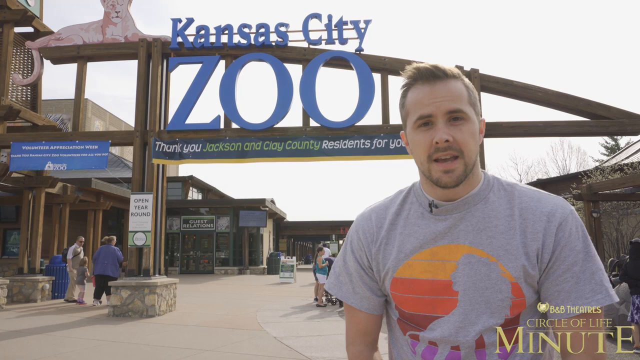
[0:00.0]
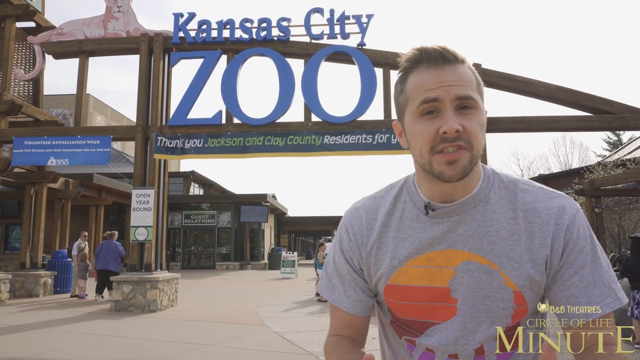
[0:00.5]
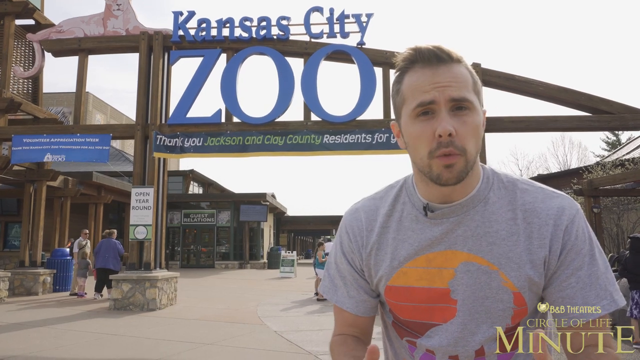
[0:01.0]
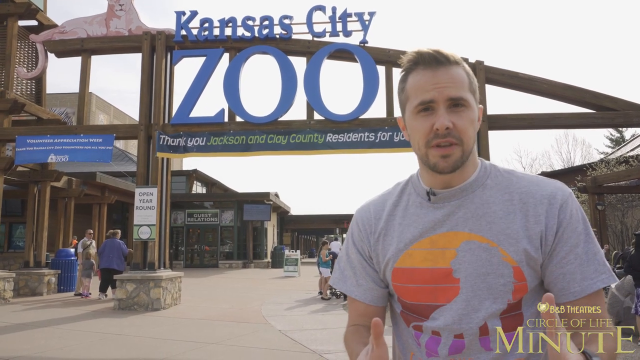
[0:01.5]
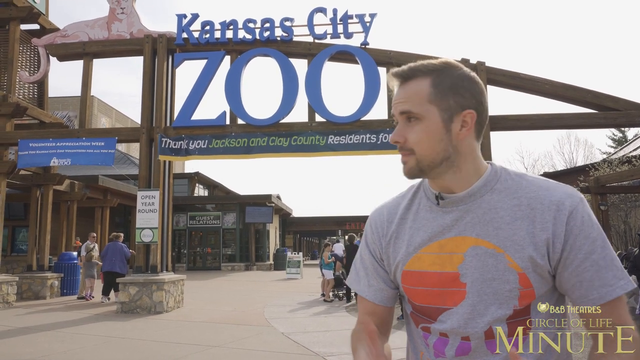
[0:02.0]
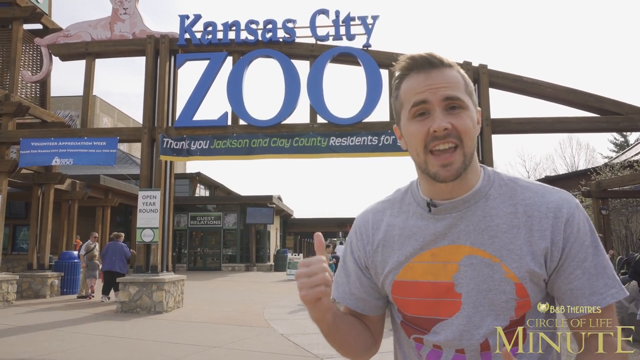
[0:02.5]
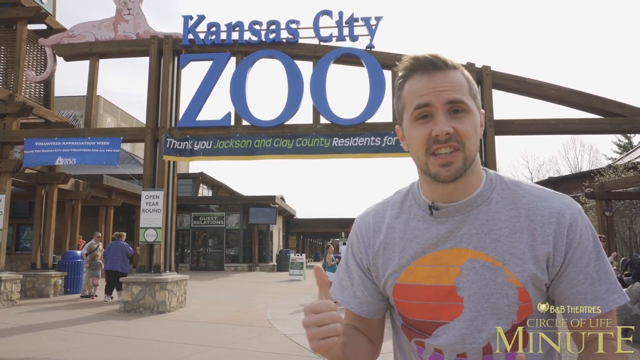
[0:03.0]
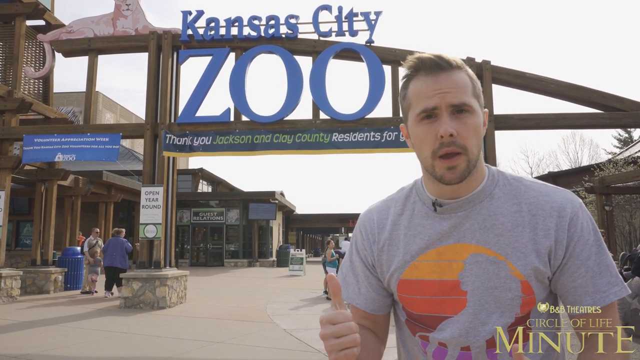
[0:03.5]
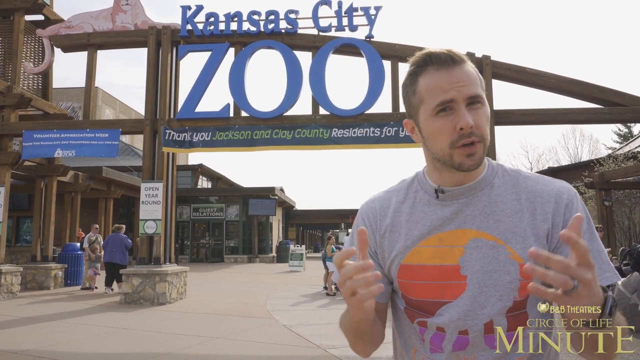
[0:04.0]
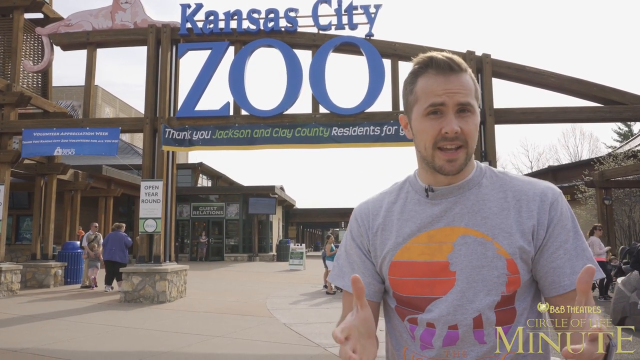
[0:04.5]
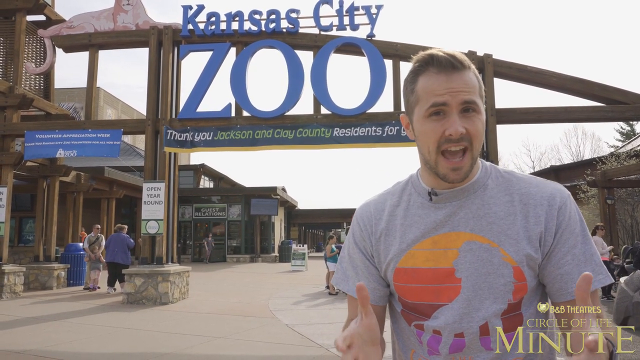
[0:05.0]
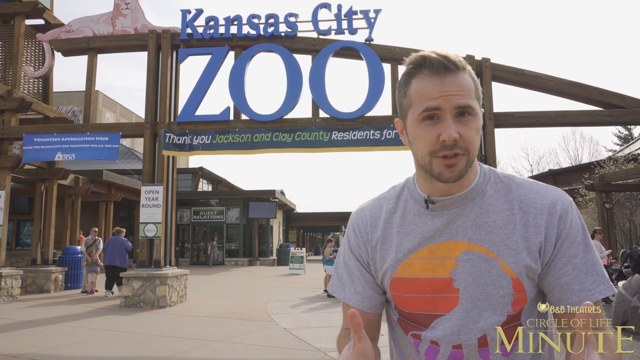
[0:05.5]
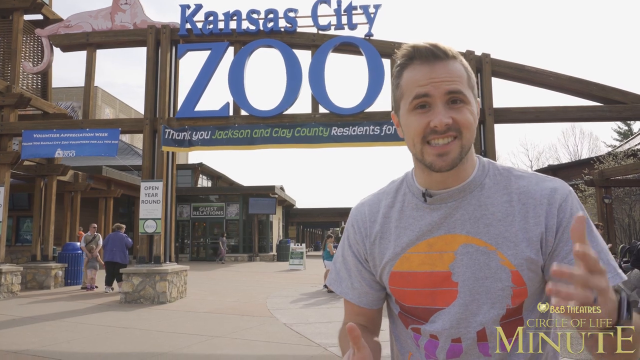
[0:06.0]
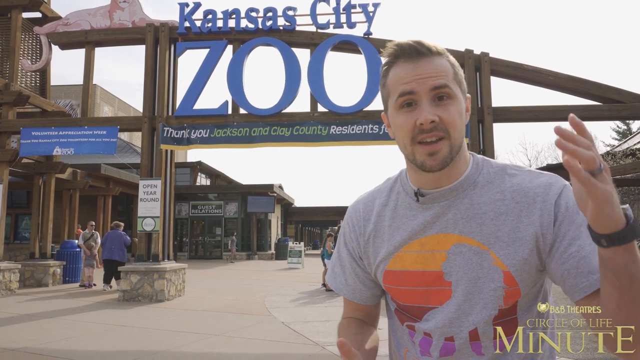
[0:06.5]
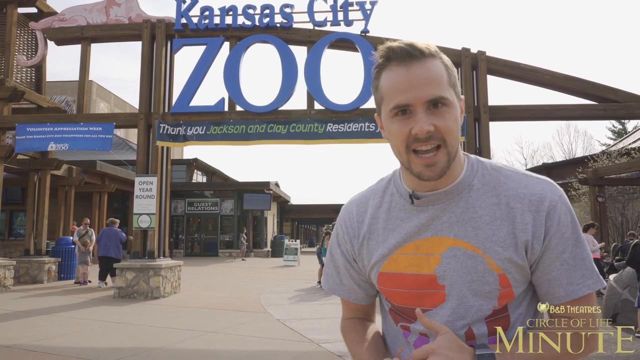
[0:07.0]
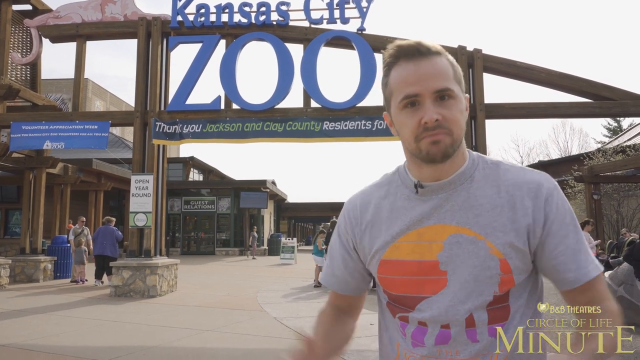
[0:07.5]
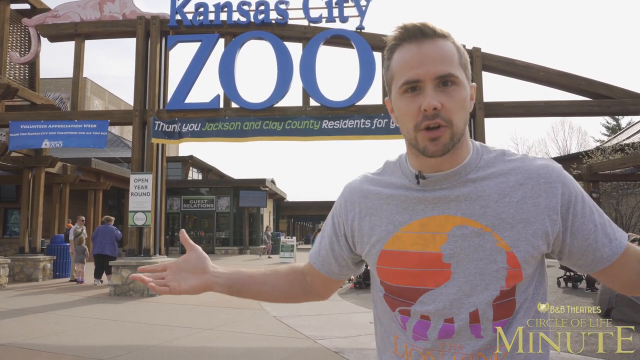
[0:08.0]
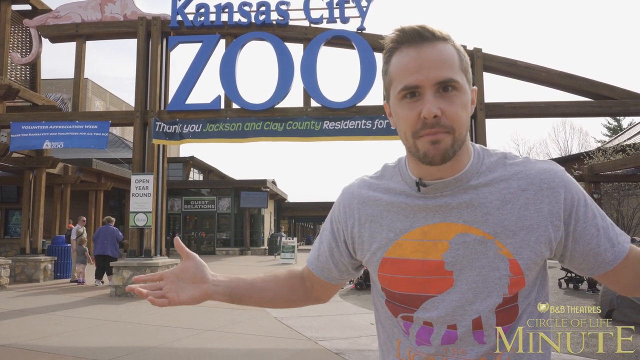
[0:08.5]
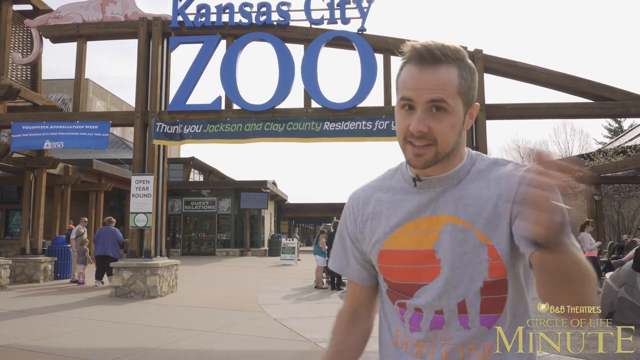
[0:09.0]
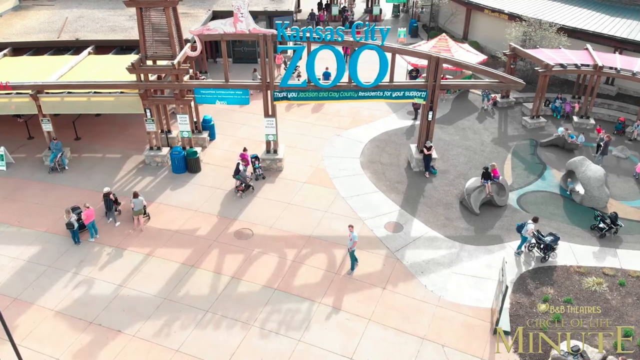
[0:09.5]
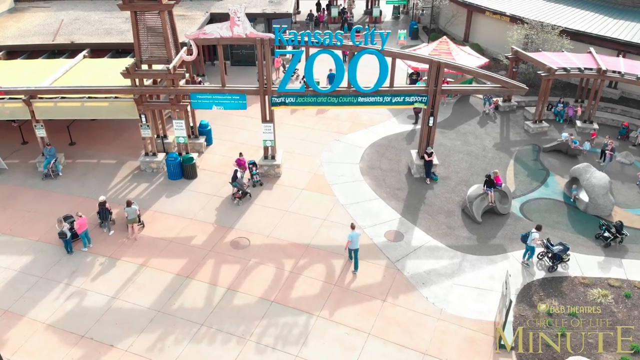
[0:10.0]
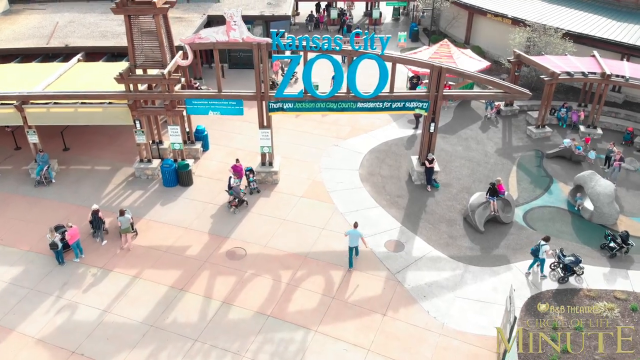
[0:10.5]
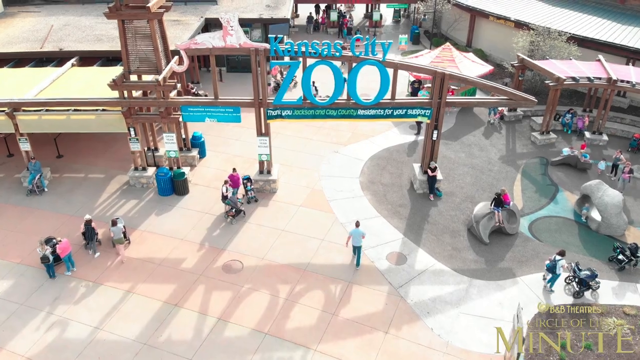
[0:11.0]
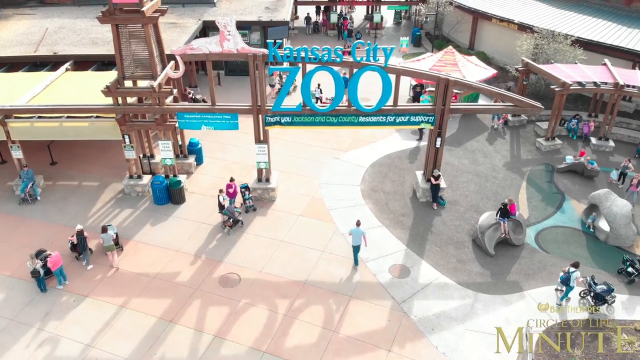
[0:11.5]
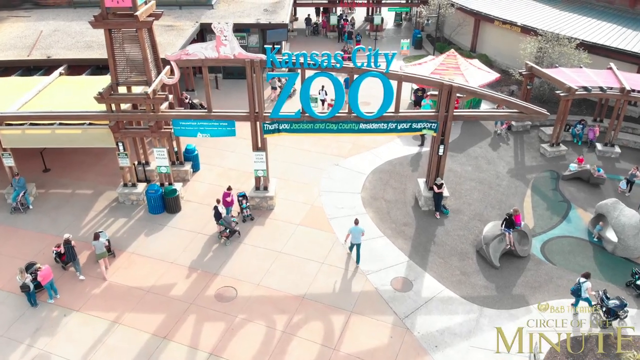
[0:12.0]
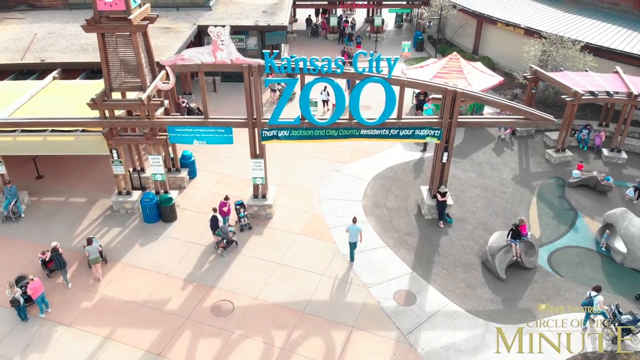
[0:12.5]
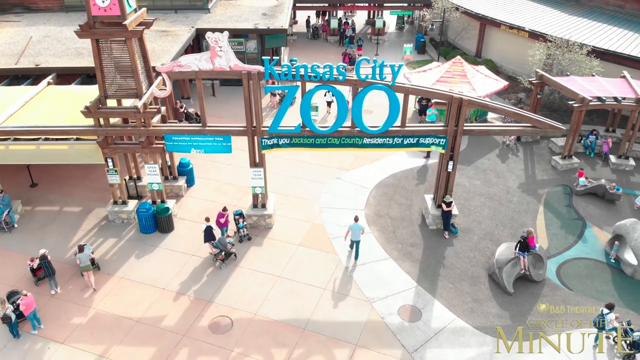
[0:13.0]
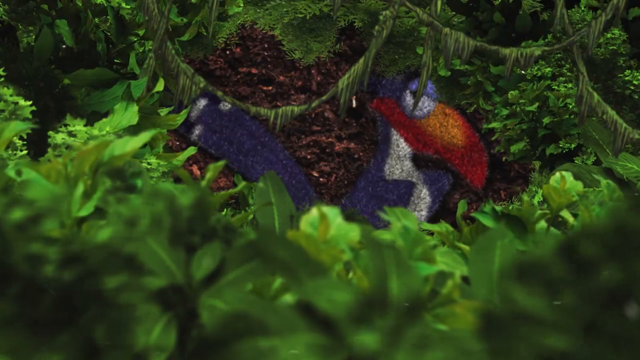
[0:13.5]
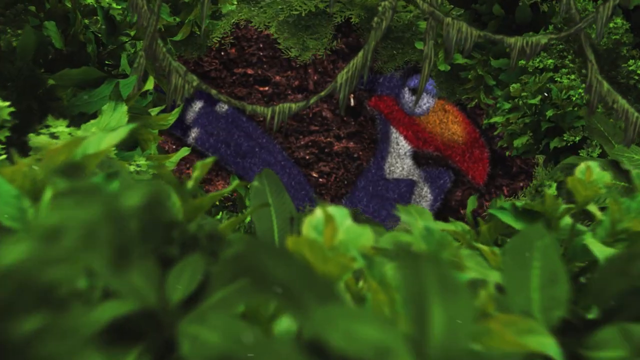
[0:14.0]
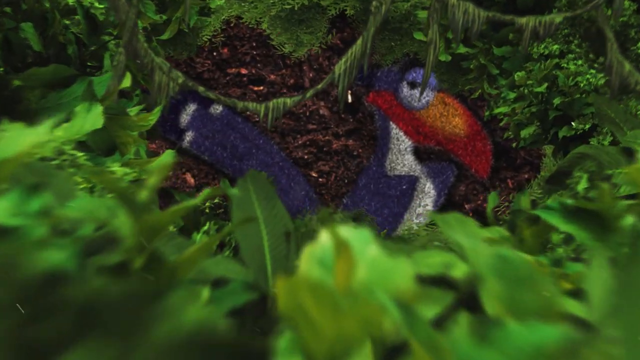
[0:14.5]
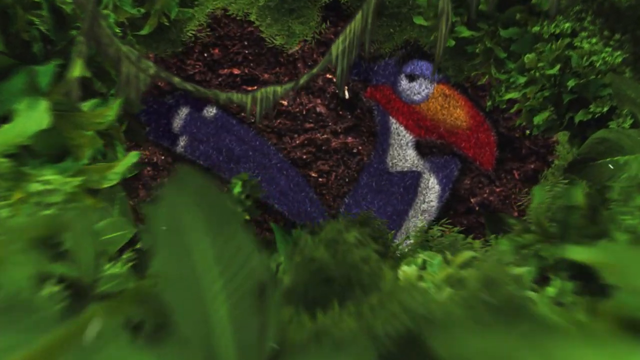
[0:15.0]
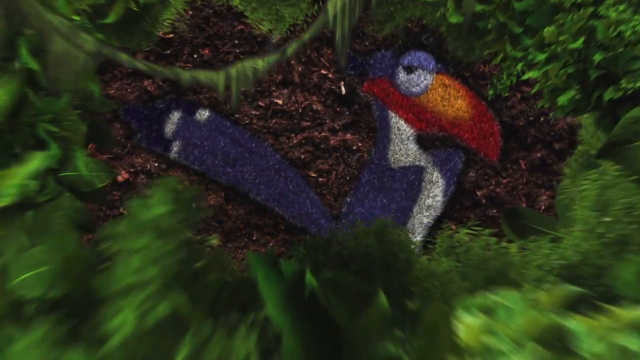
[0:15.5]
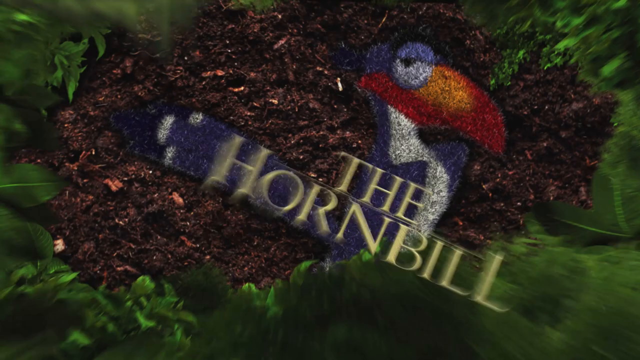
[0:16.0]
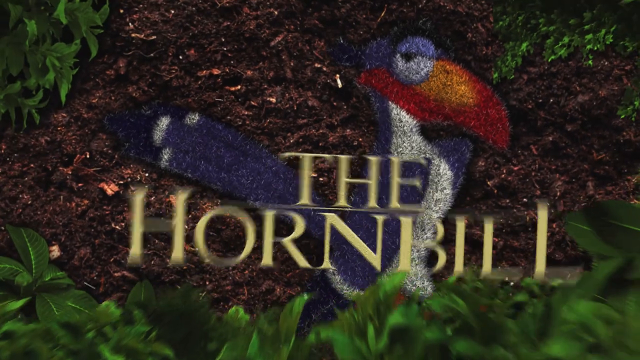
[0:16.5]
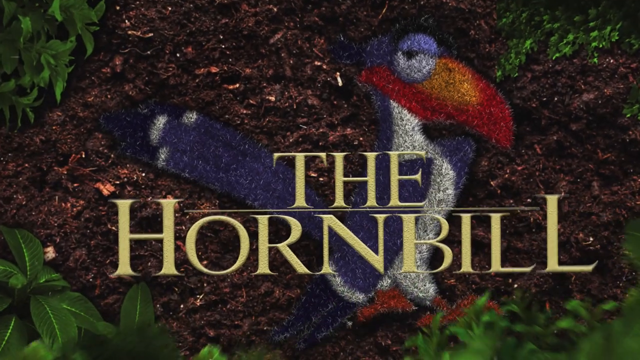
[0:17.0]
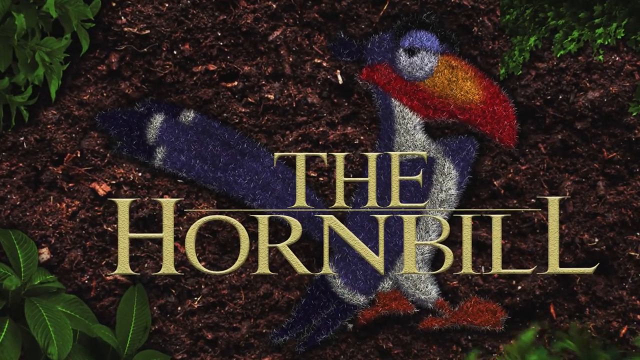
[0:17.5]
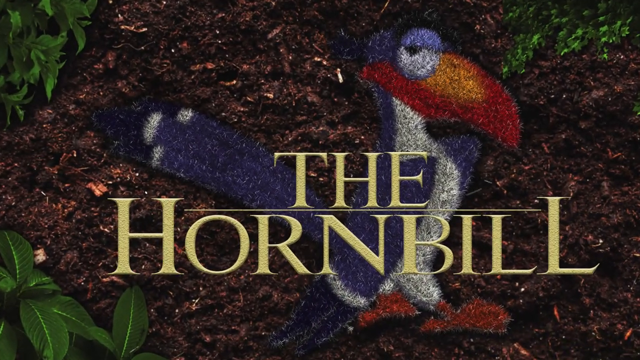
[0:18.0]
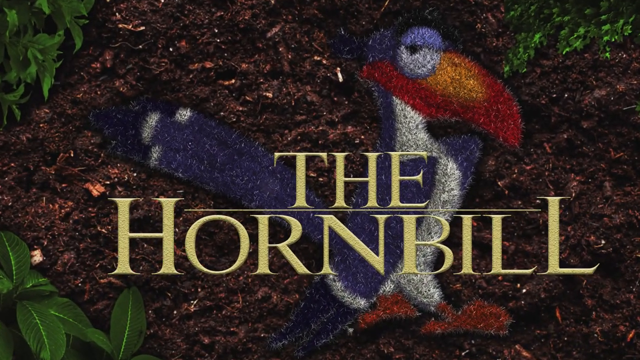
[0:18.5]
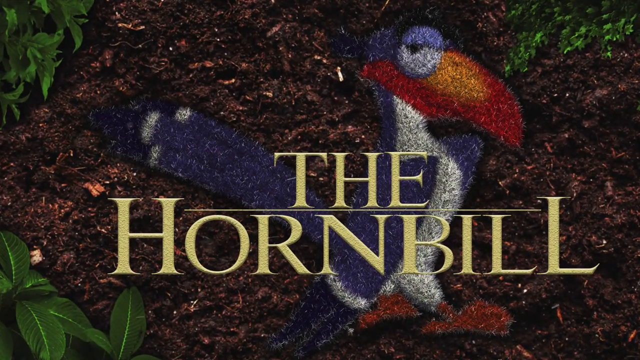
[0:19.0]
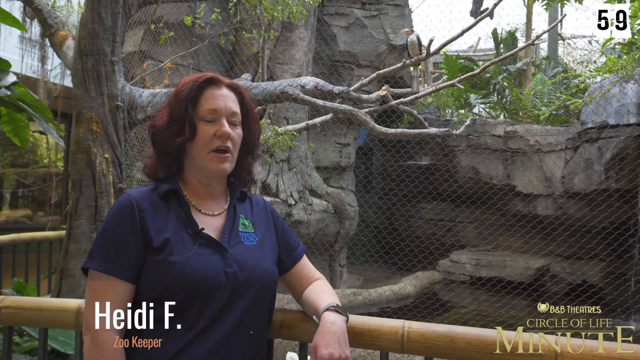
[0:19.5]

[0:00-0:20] In the background, a sign on top of a wooden structure reads "Kansas City Zoo. Thank you, Jackson and Clay County residents for your support." There are many wooden stores and wooden structures, as well as a sign saying the zoo is open year-round. On the right of the screen is a young man with short blonde hair, white skin and a bit of stubble, wearing a grey shirt with some colourful drawings on it. He speaks to the camera emphatically, moving his hands, and wears a black watch on his left wrist. An aerial shot, probably from a drone, follows as he enters through the wooden structure that says "Kansas City Zoo." The camera then enters among some trees, and on the ground, on the dirt, there is a blue bird with an orange and yellow beak, a white belly and orange legs, as the title reads "the hornbill."